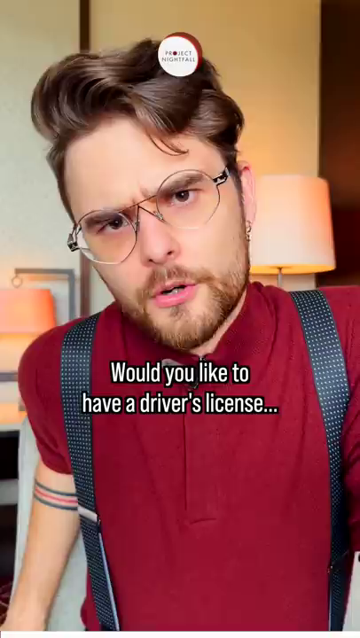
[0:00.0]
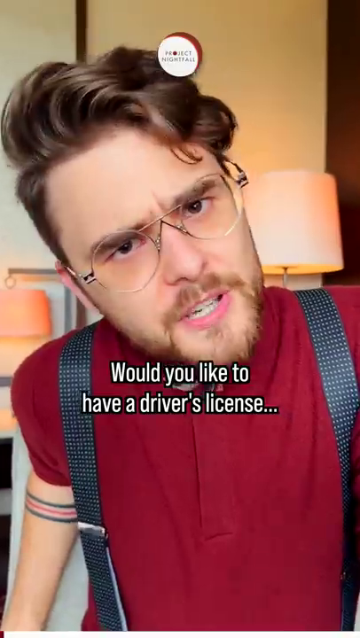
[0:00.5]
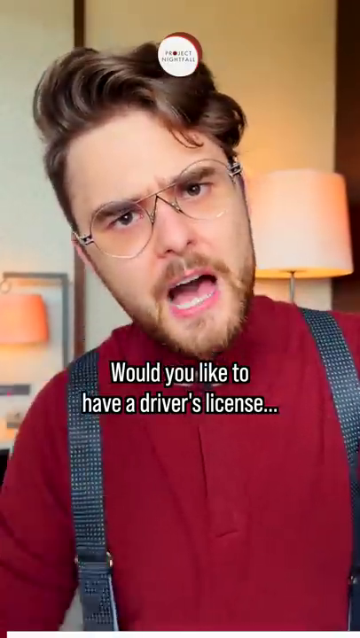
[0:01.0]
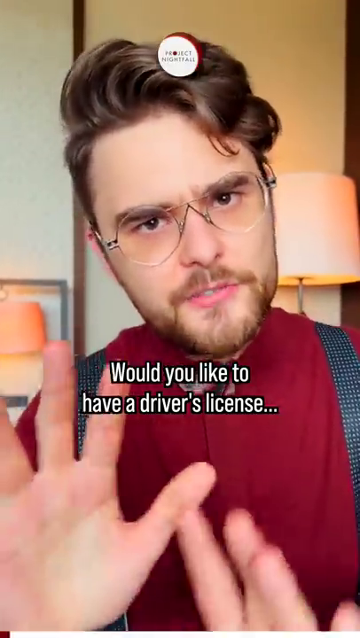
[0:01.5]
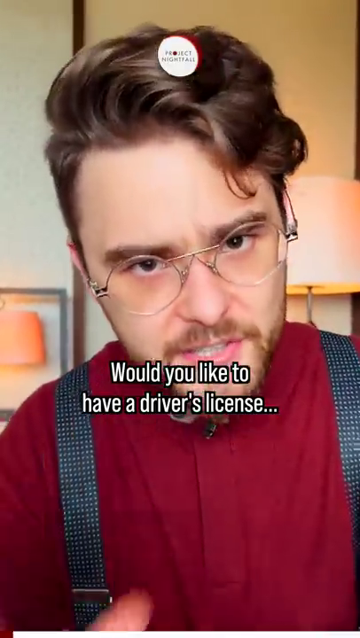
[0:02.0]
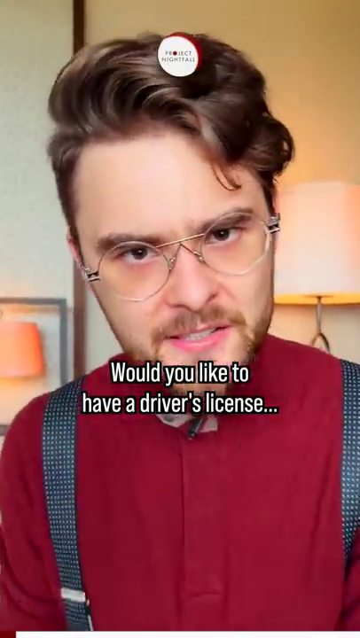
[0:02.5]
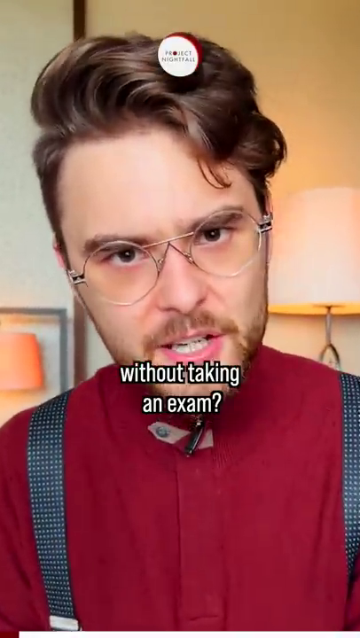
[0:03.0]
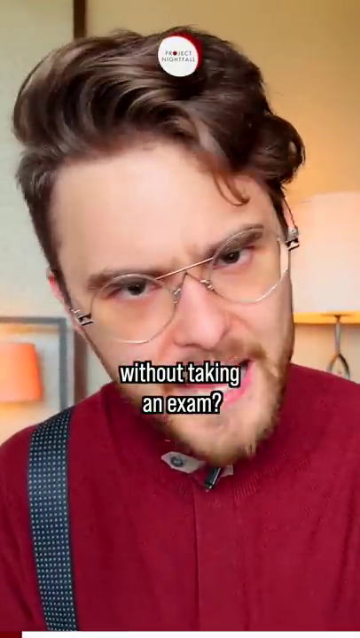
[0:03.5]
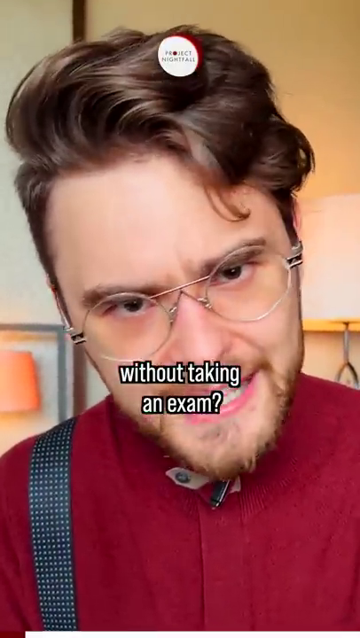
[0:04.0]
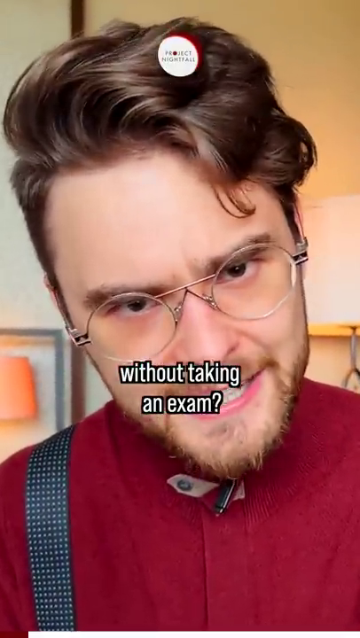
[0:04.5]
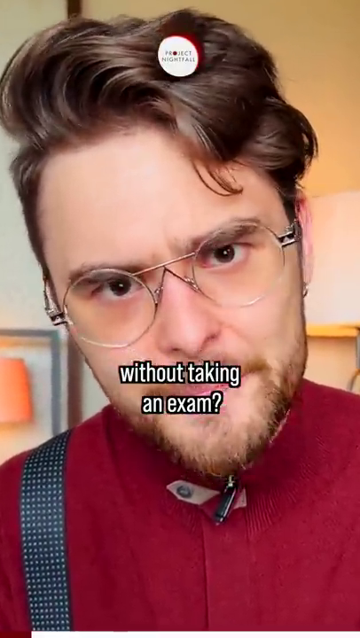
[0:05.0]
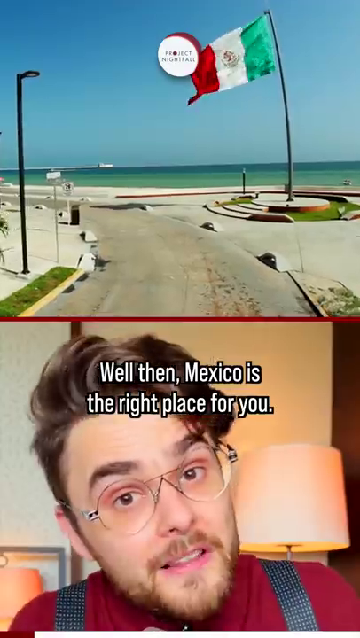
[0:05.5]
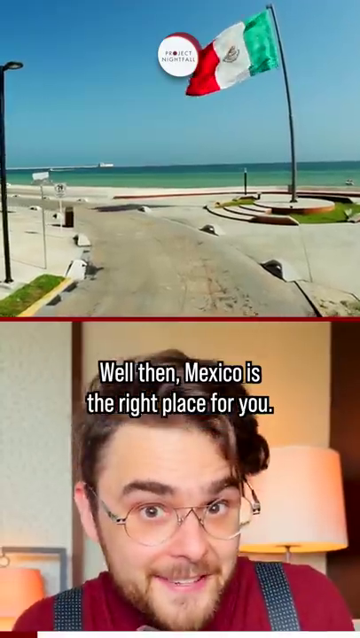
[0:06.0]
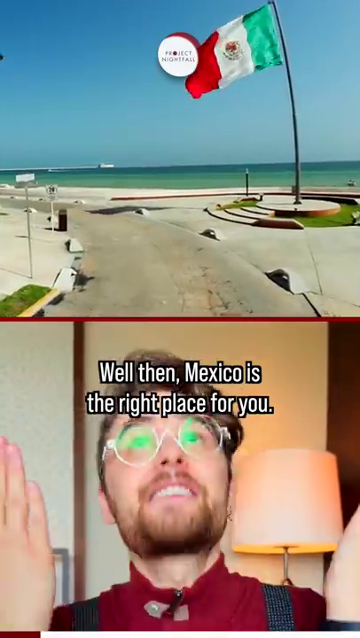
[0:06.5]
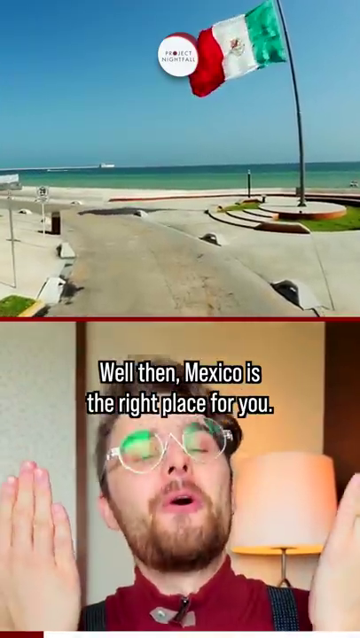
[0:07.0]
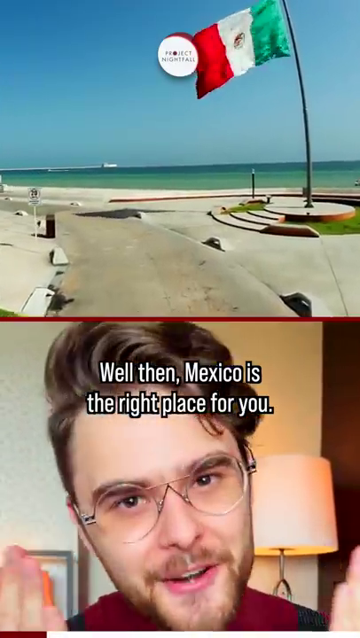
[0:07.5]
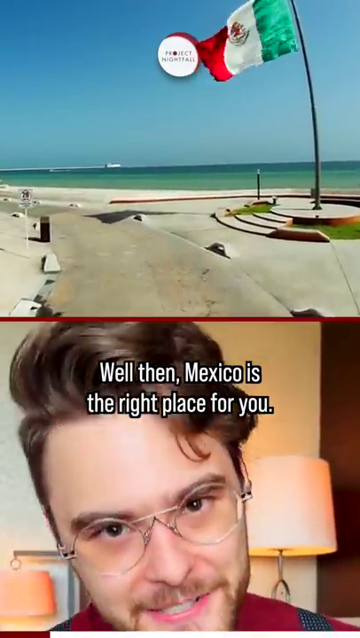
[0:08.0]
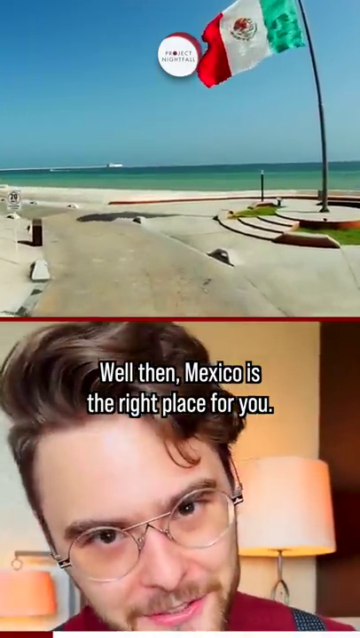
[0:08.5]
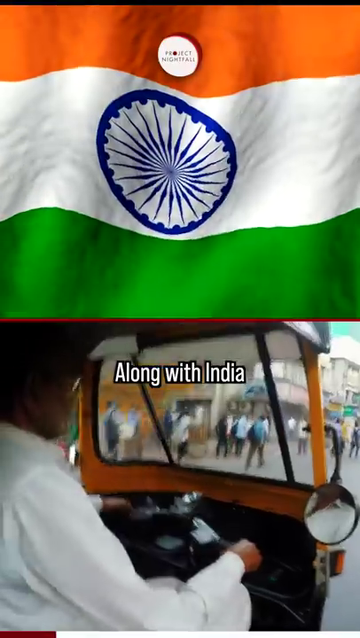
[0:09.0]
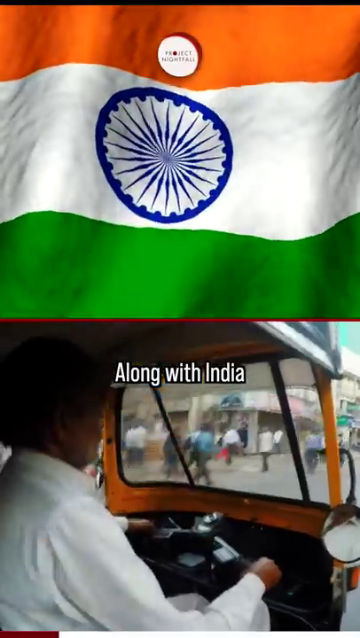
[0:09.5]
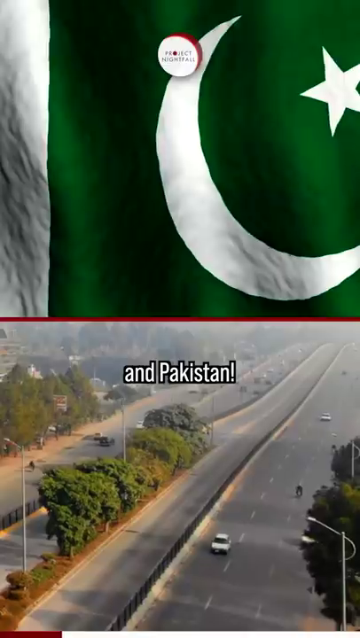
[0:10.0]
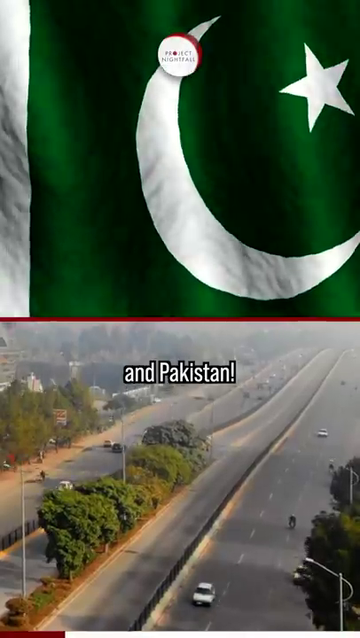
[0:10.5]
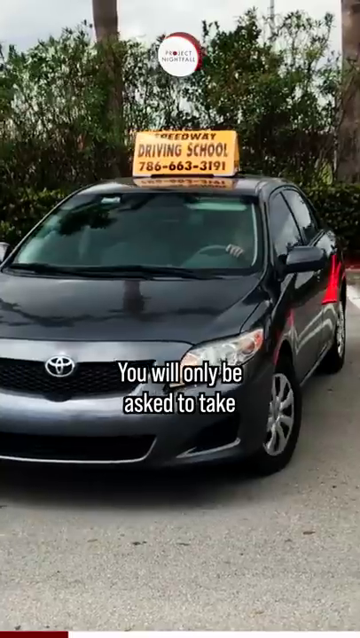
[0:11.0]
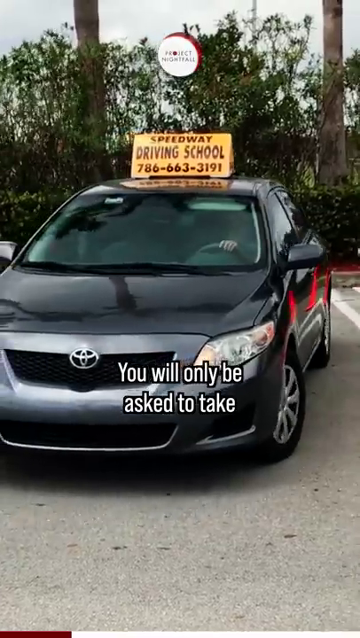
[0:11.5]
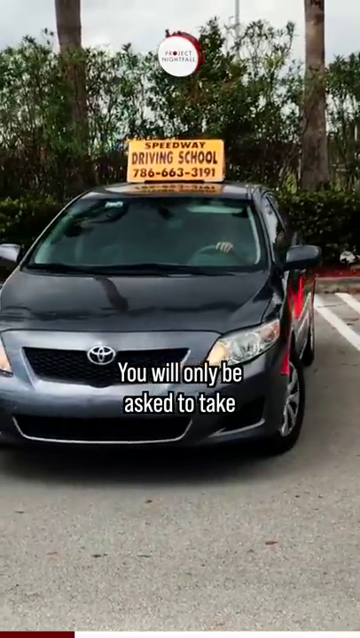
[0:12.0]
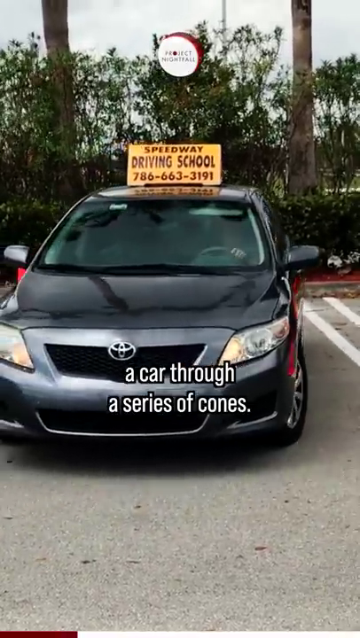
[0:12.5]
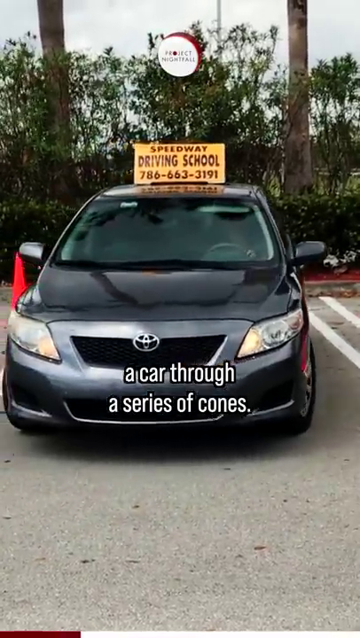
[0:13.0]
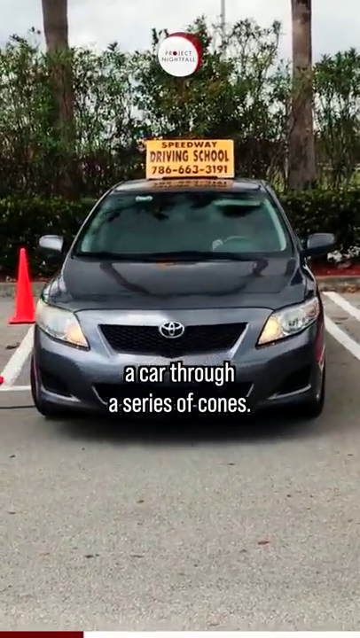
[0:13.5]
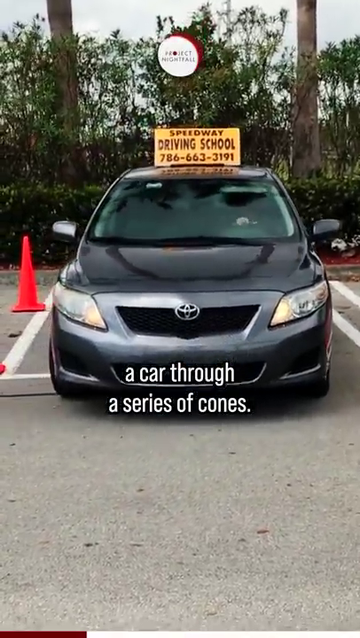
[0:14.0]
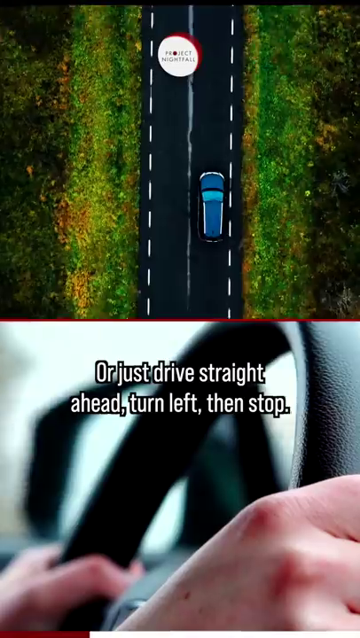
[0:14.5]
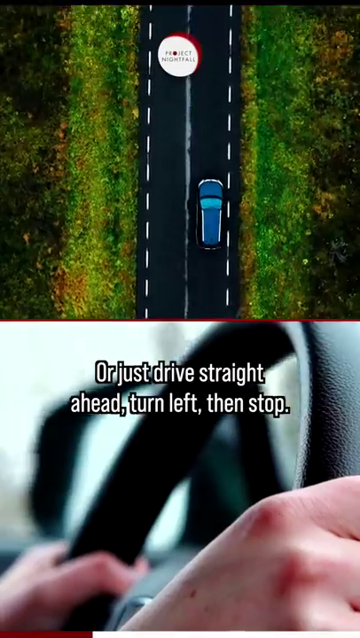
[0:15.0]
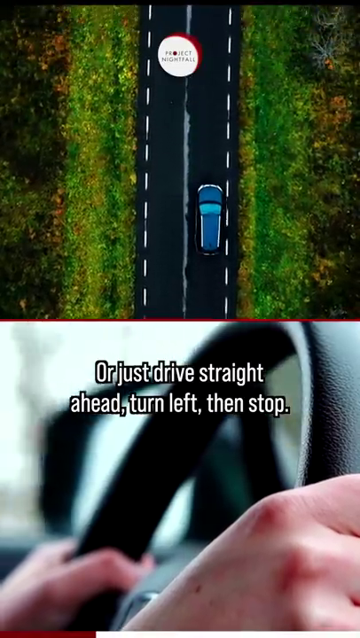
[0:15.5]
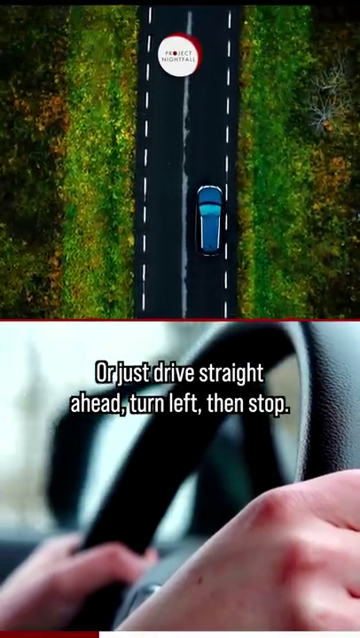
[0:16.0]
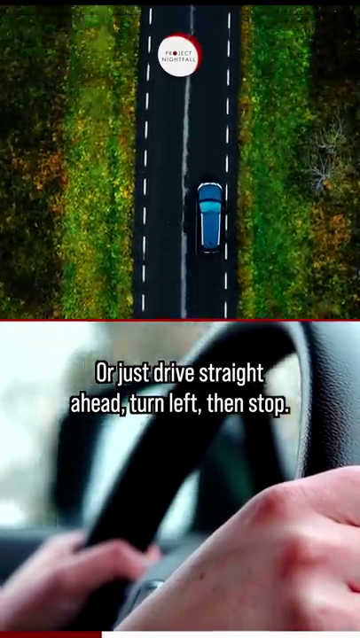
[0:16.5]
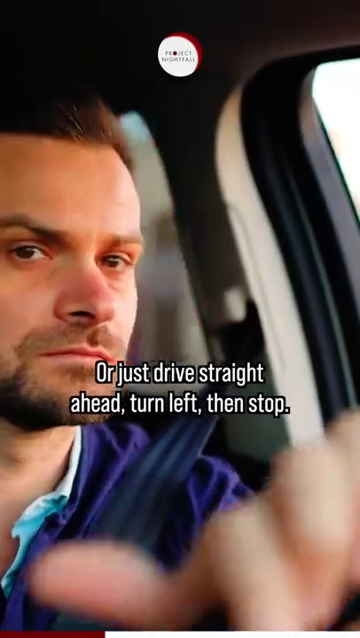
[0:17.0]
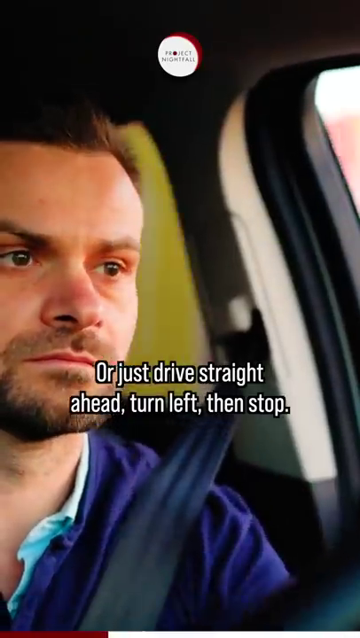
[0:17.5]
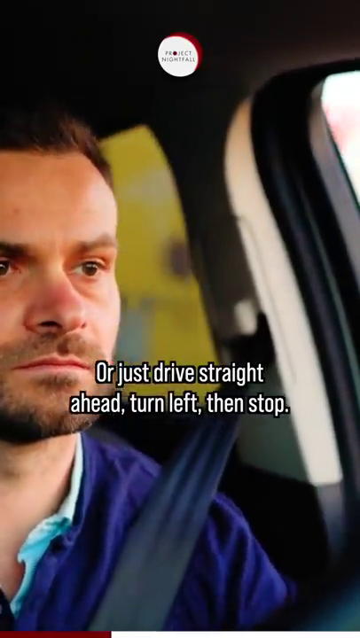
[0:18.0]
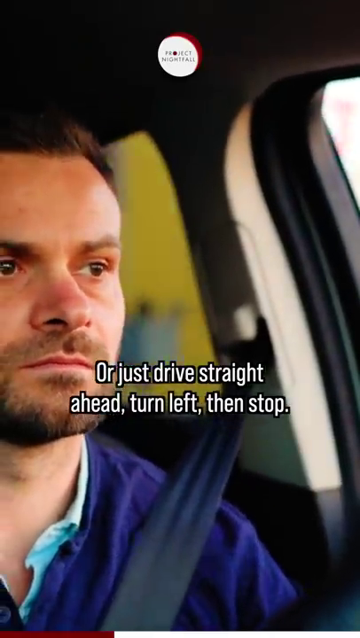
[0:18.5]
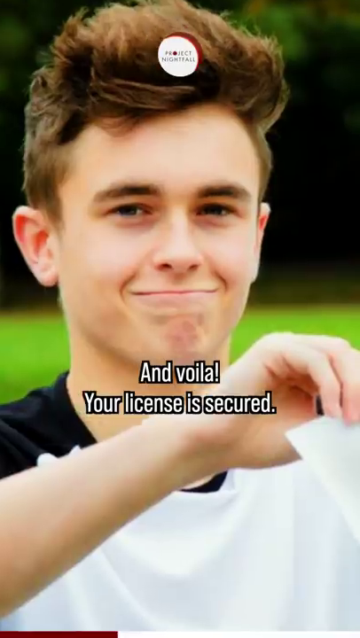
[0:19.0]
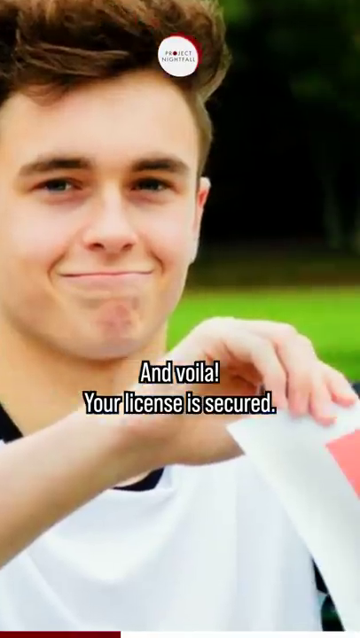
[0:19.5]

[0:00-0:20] A man wearing a burgundy shirt and what appears to be suspenders is in a room with lamps. The video opens by asking whether the viewer would like to get a driver's license without taking an exam. The man appears only in the first few seconds before the video pans to other scenes: a split screen with different countries, Mexico, Pakistan and India, several clips of other people driving, and pictures of people holding something in their hand, showing driving straight and turning left or right.